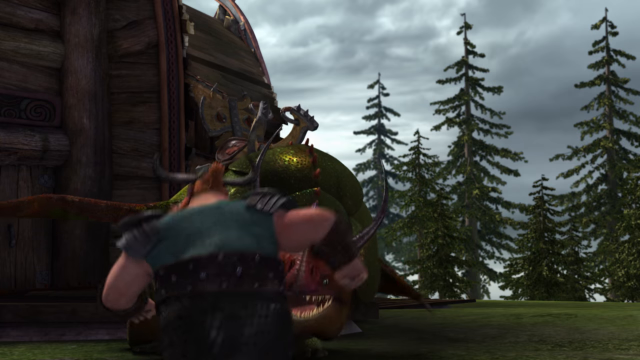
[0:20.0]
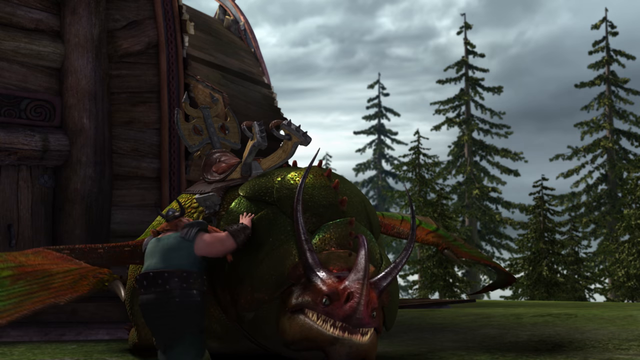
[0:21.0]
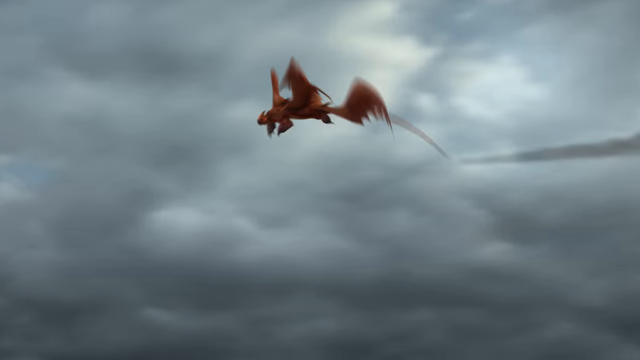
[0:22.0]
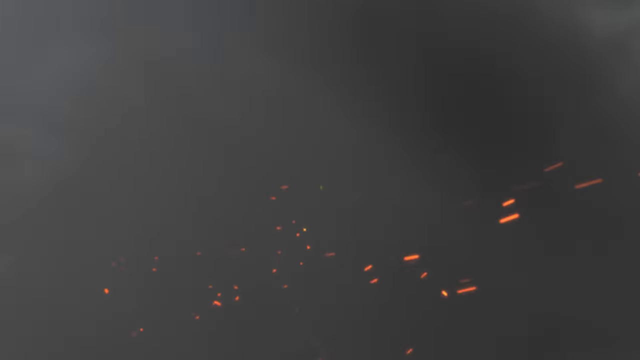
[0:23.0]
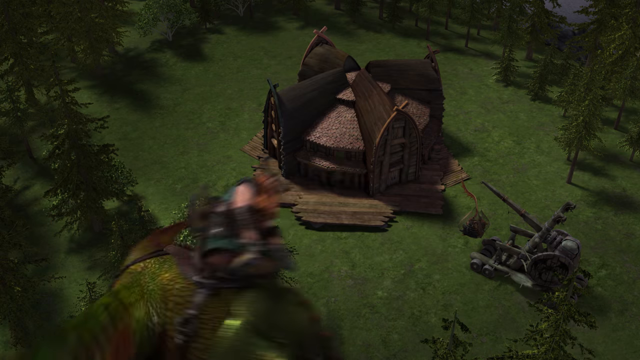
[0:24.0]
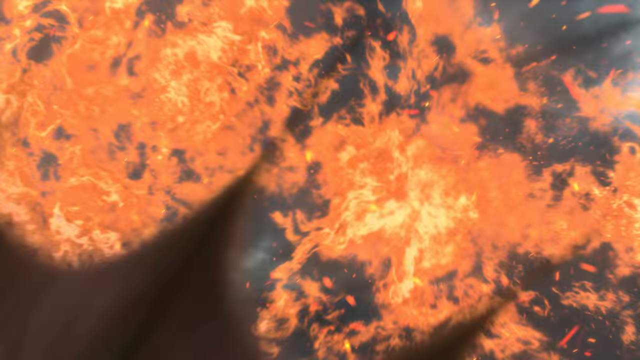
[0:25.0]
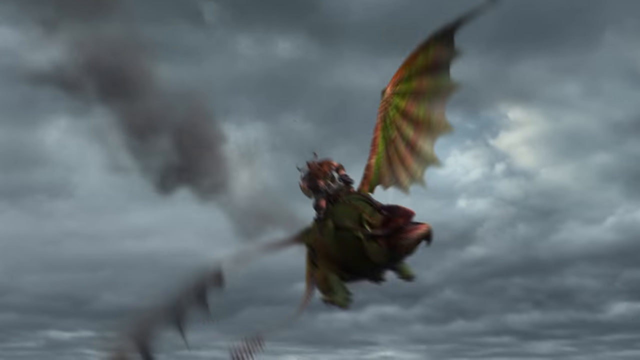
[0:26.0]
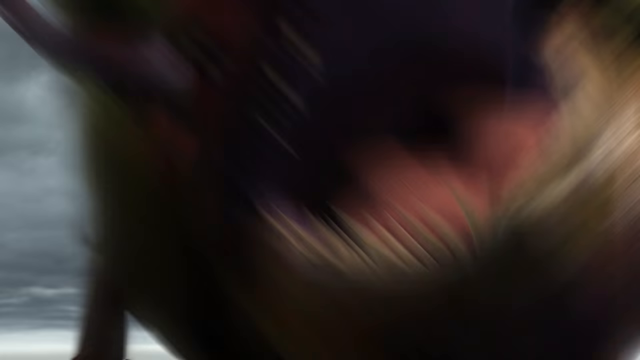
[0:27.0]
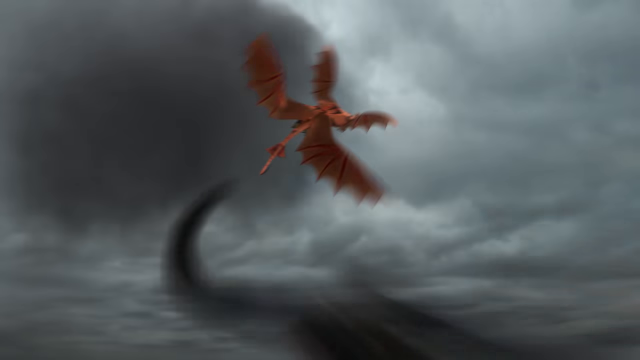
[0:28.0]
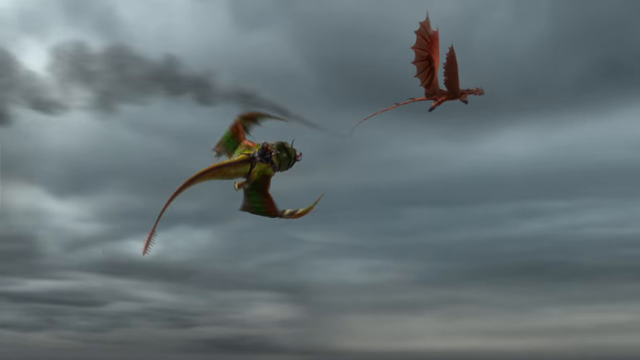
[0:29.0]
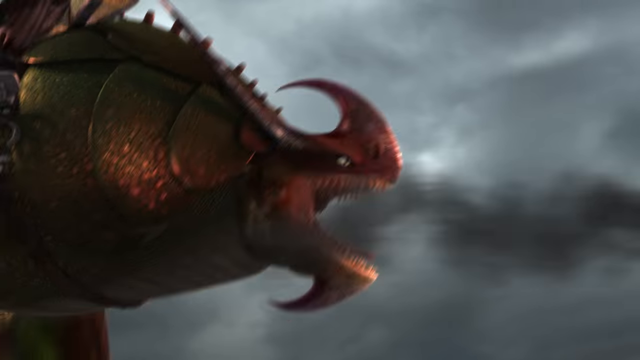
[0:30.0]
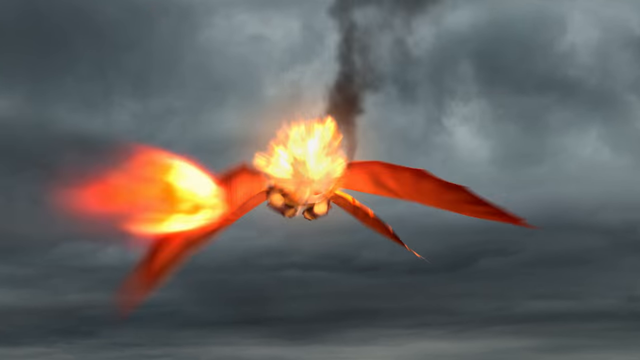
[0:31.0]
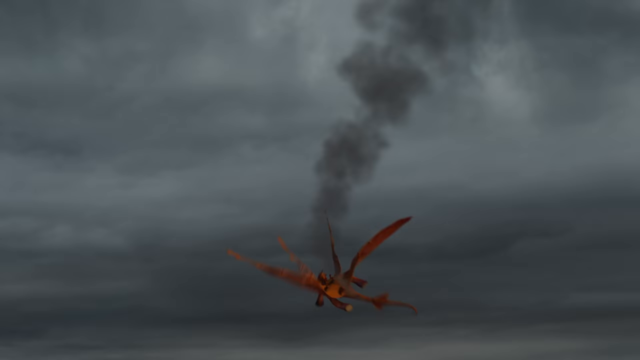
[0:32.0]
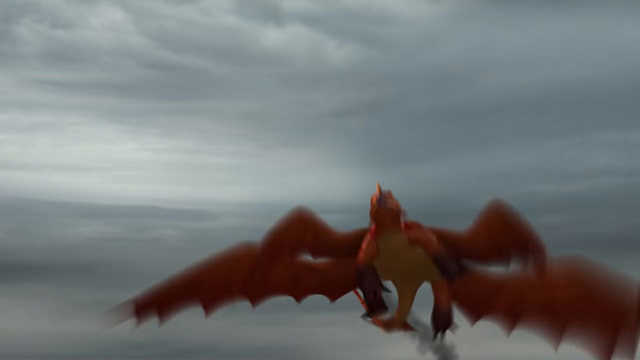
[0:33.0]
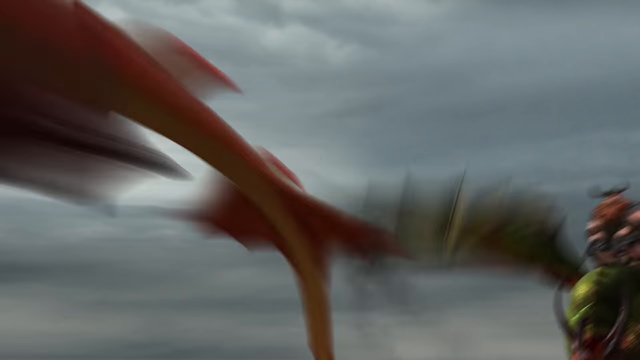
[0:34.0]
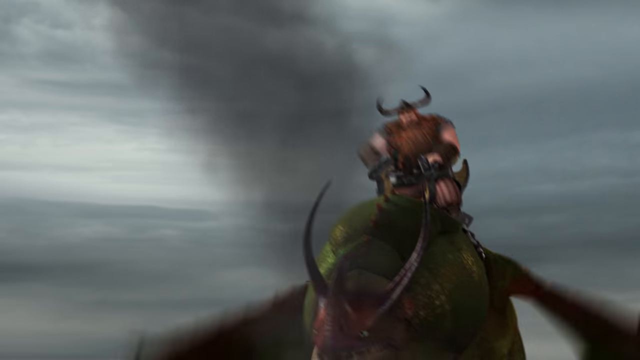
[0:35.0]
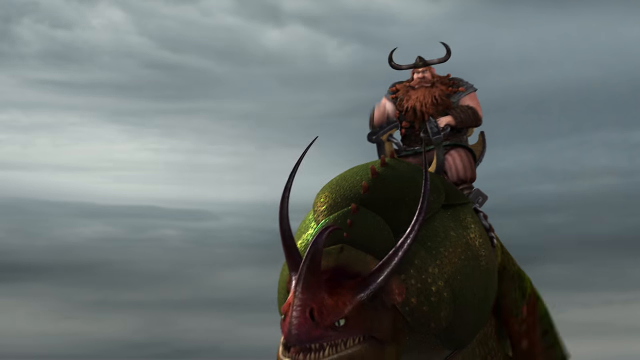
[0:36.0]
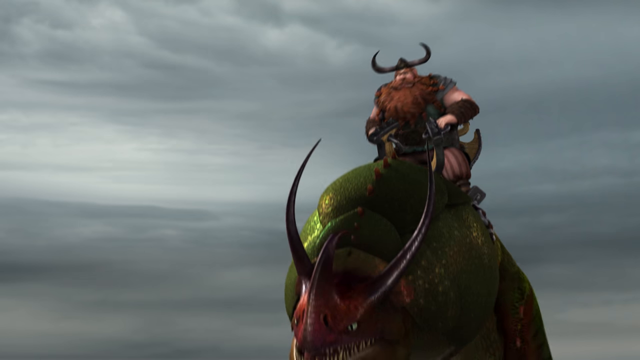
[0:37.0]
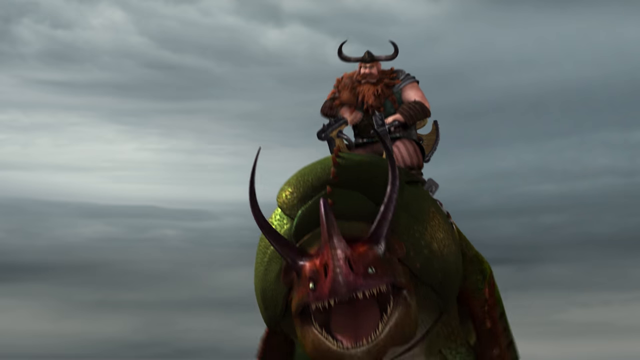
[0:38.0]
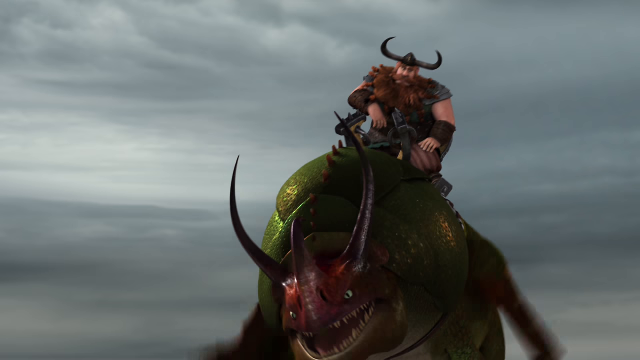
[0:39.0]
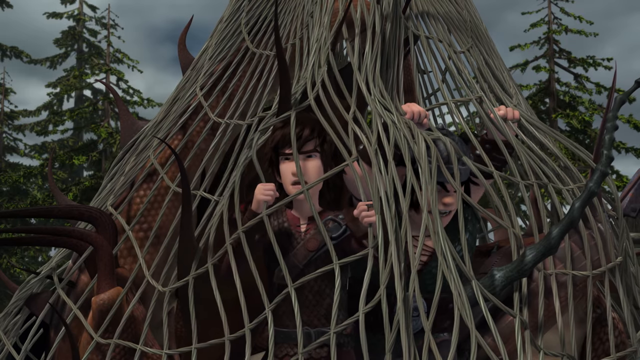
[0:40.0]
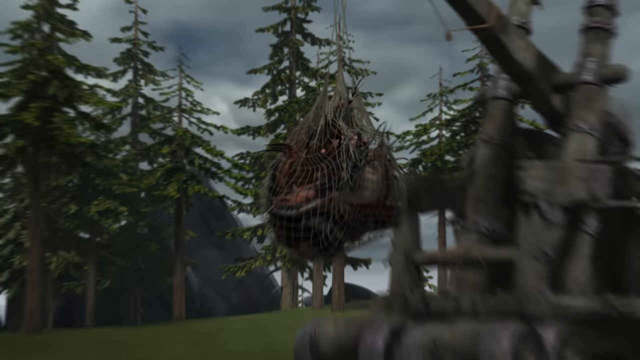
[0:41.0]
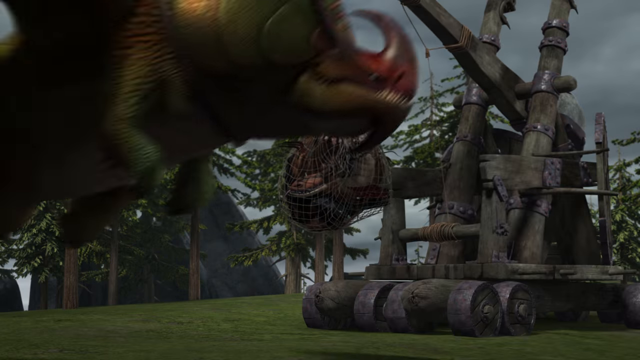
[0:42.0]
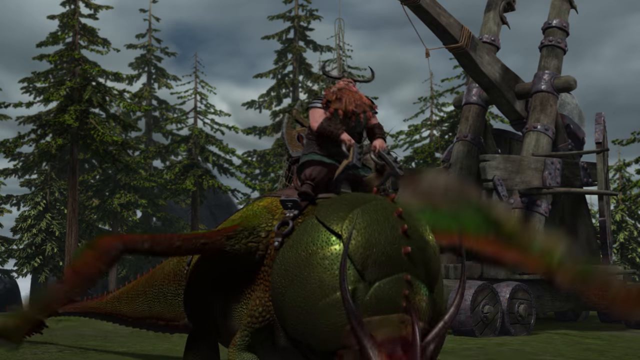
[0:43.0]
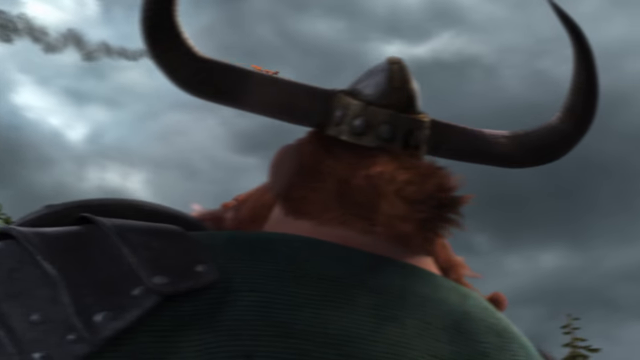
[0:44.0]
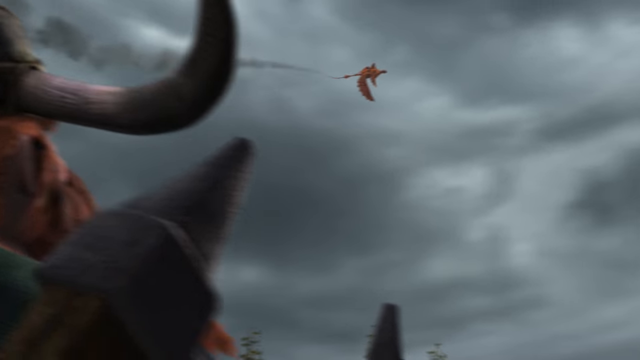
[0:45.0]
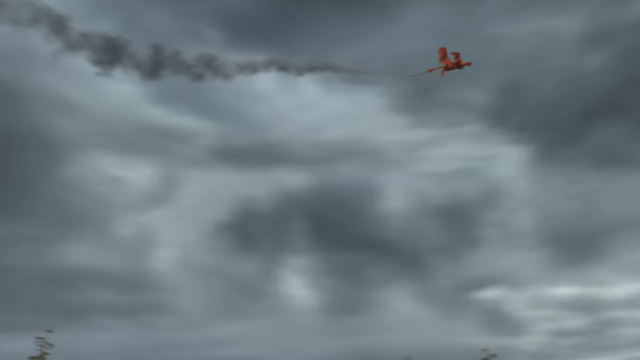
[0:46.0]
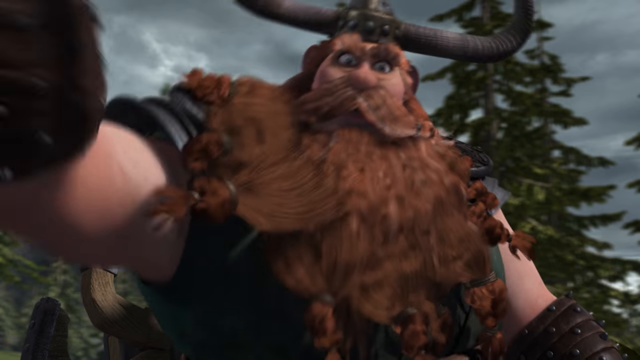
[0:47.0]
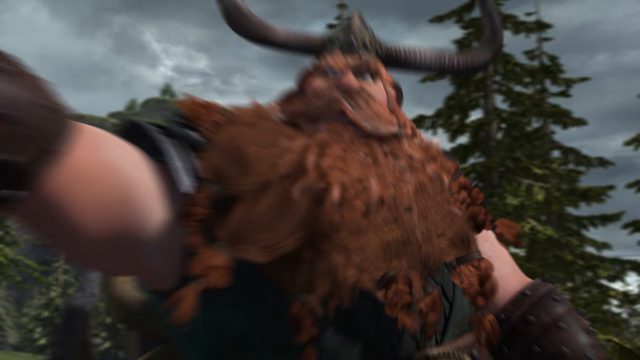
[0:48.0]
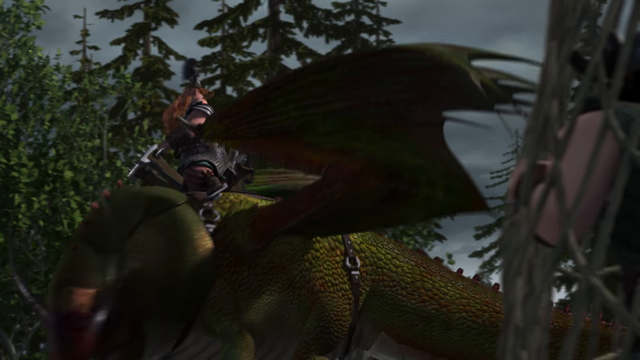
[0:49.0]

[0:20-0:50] The Viking gets into a saddle to ride a dragon, and the orange dragon is shooting fire. The Viking is perched atop a green dragon and appears to be in pursuit of the orange dragon. The green dragon he rides shoots fireballs at the orange dragon. The Viking shakes his fist as if disappointed with the outcome of the pursuit; maybe they did not stop the dragon, and he is no longer pursuing it. The green dragon and the Viking are kind of just floating in midair, the dragon flapping its wings while they stay suspended in one place. The scene cuts back to the net, where the first two characters are speaking; they are hanging from what almost looks like a kind of wooden crane. The Viking and the dragon then come back into frame and land on the ground in front of them.